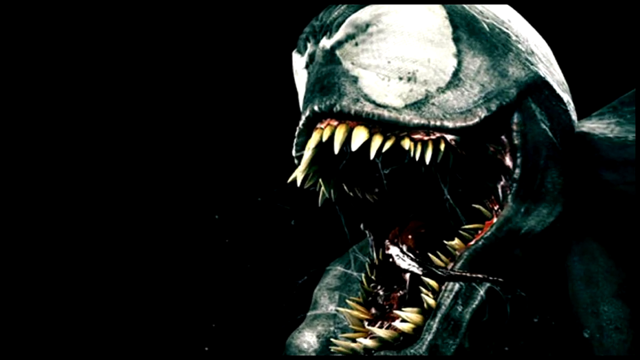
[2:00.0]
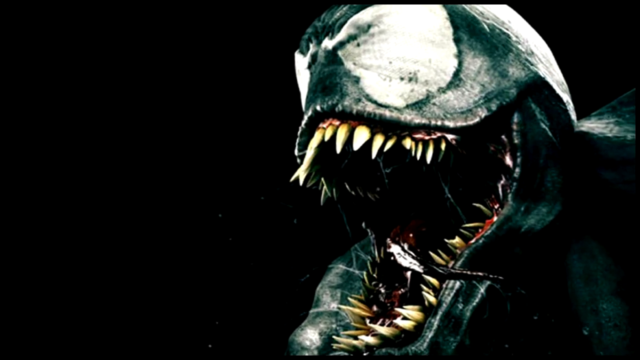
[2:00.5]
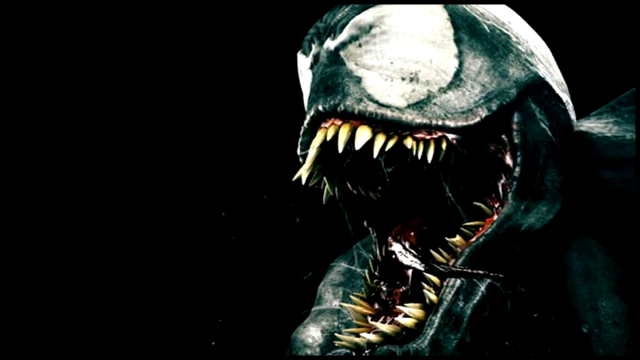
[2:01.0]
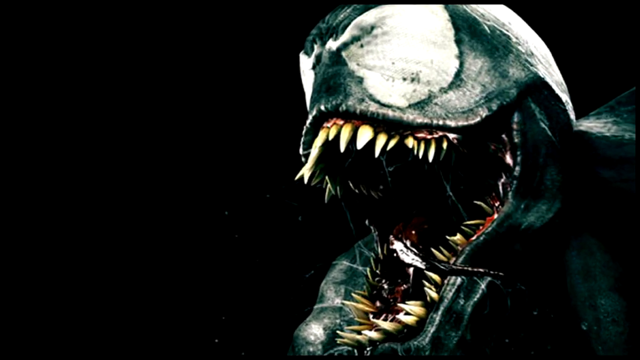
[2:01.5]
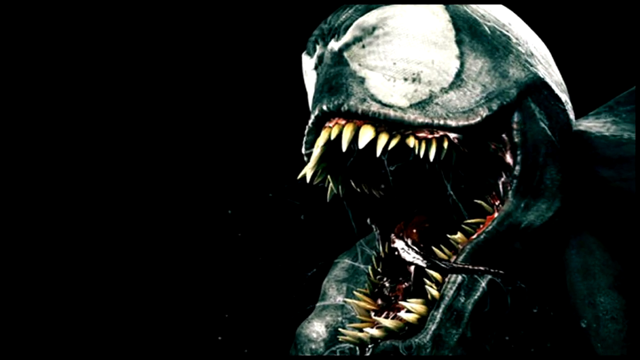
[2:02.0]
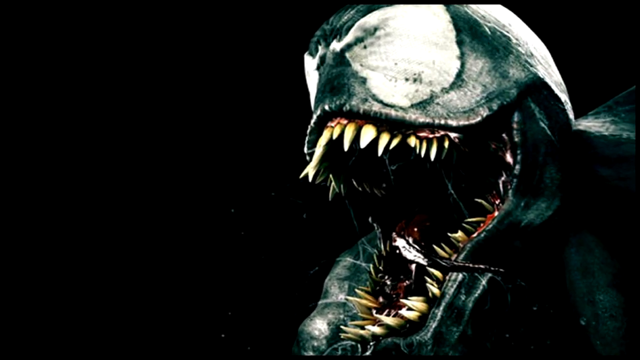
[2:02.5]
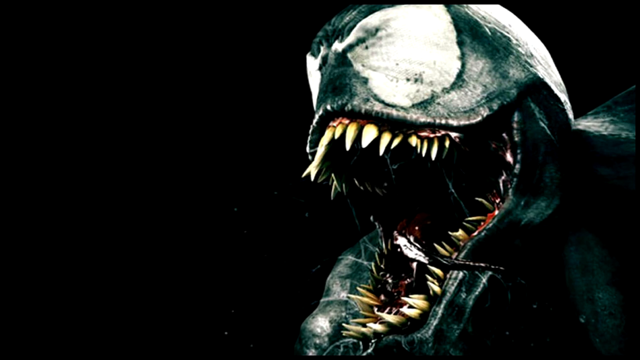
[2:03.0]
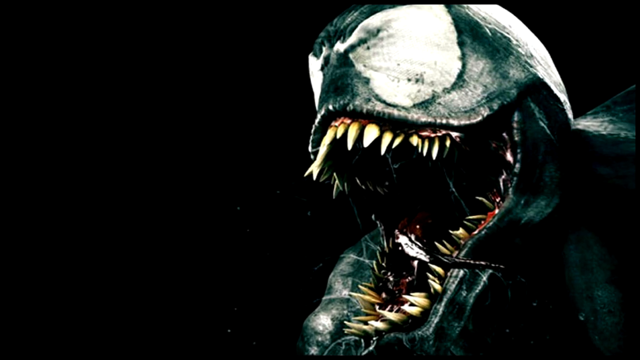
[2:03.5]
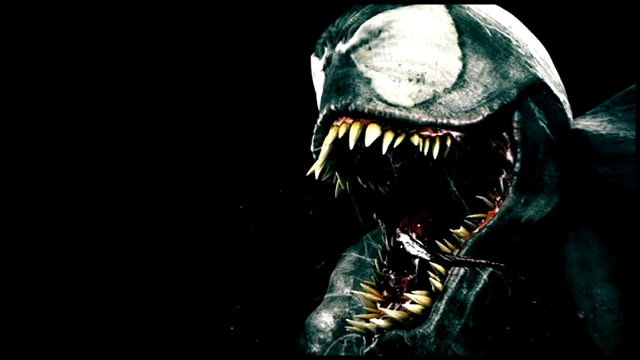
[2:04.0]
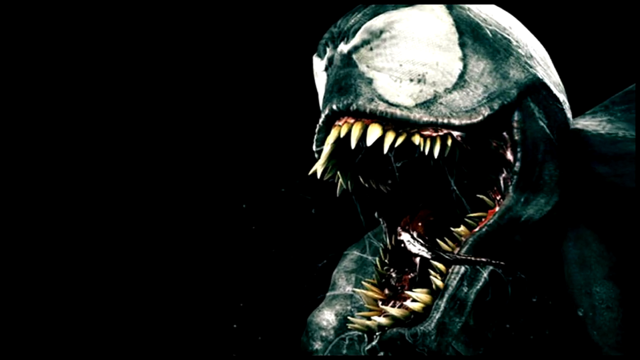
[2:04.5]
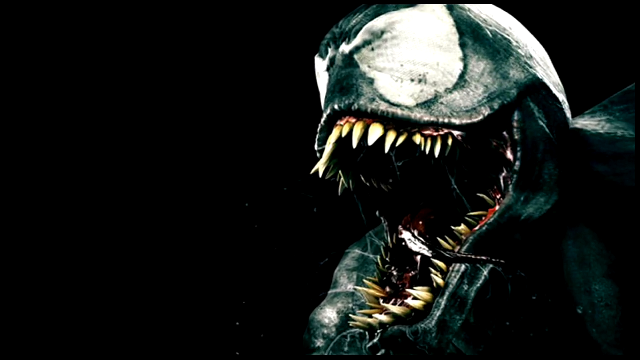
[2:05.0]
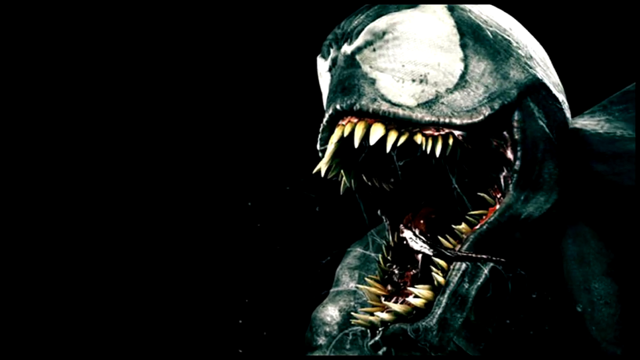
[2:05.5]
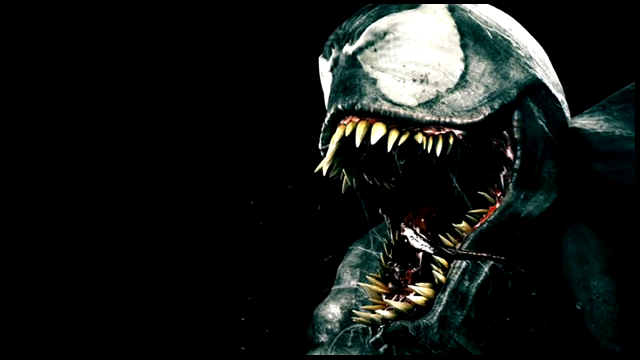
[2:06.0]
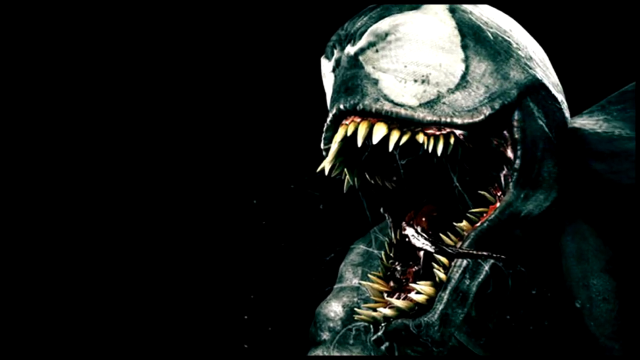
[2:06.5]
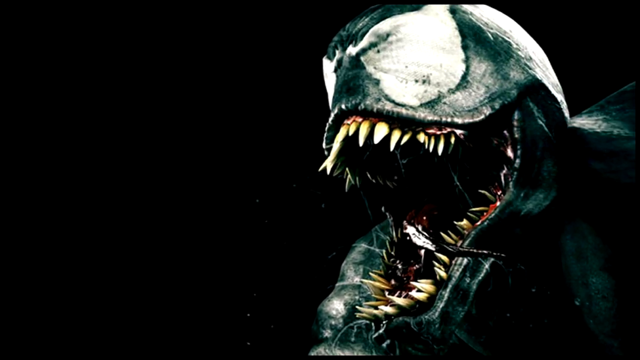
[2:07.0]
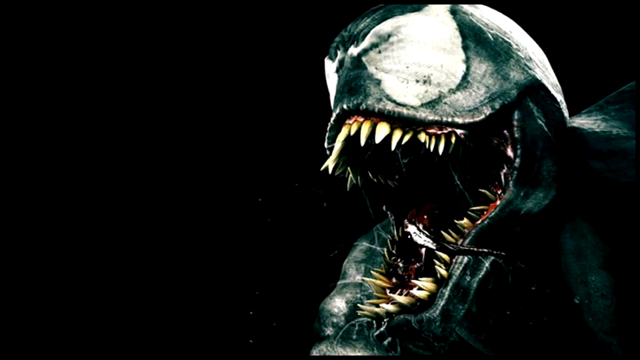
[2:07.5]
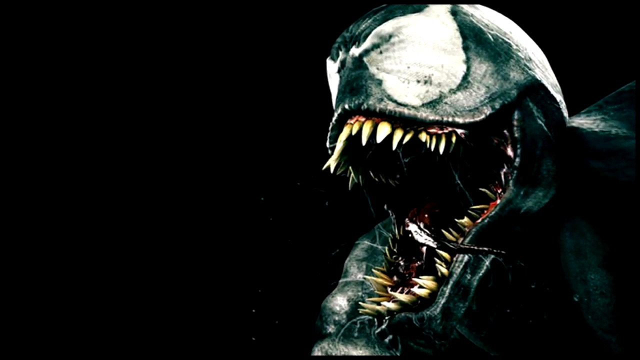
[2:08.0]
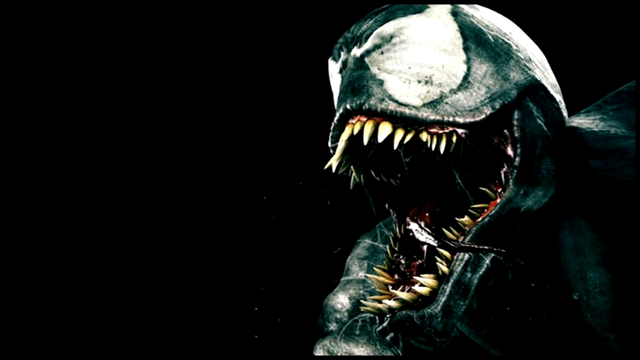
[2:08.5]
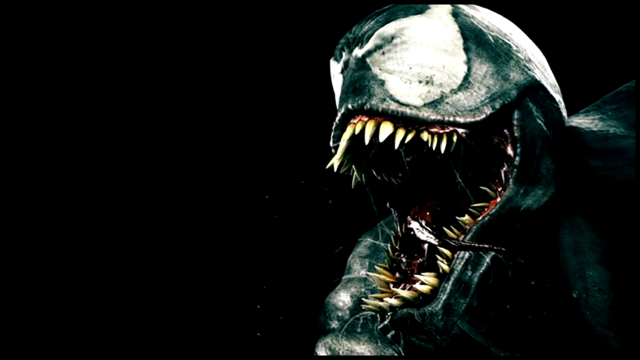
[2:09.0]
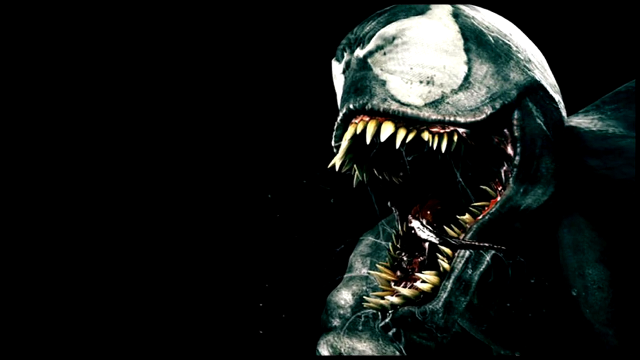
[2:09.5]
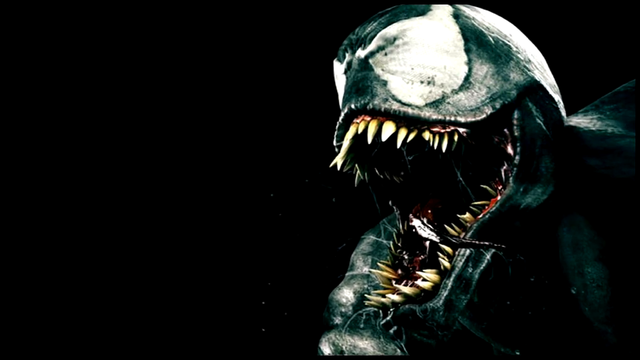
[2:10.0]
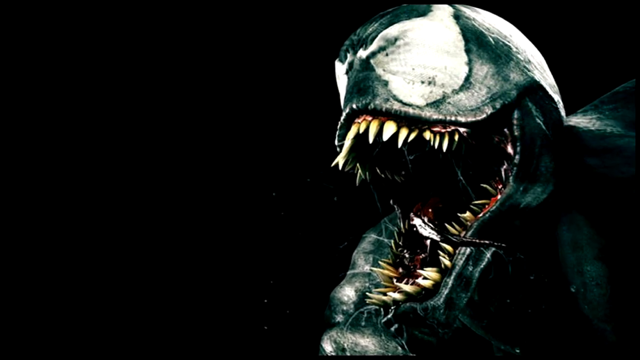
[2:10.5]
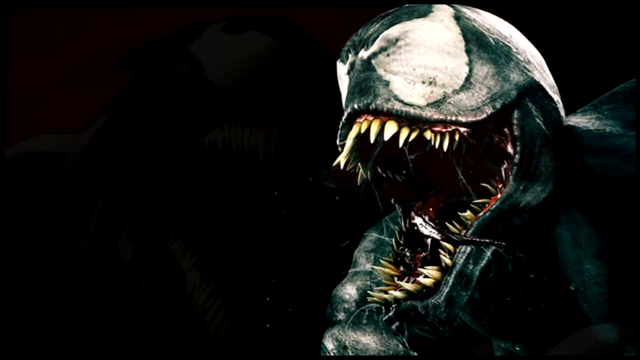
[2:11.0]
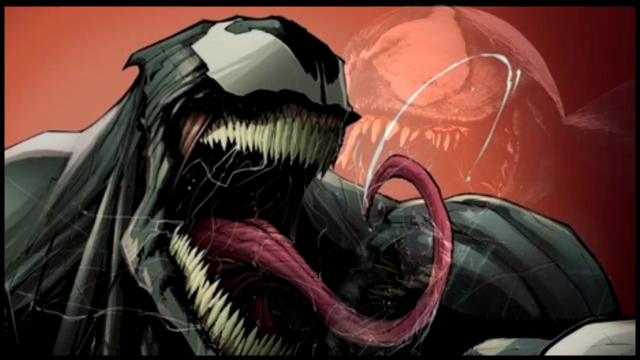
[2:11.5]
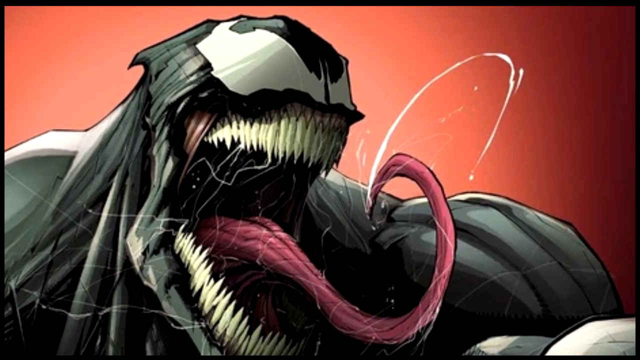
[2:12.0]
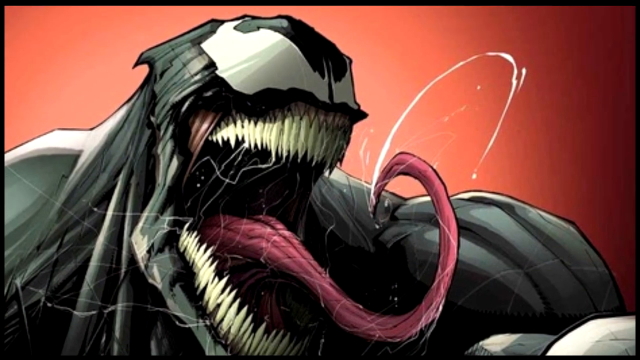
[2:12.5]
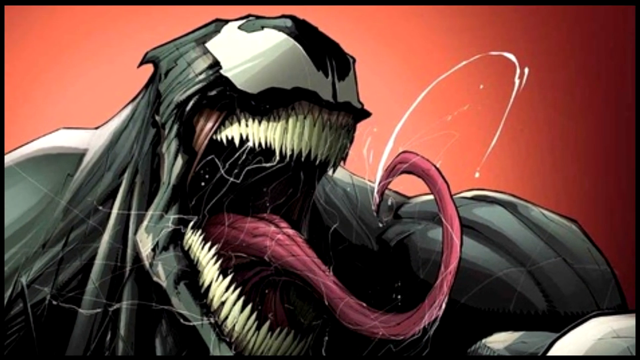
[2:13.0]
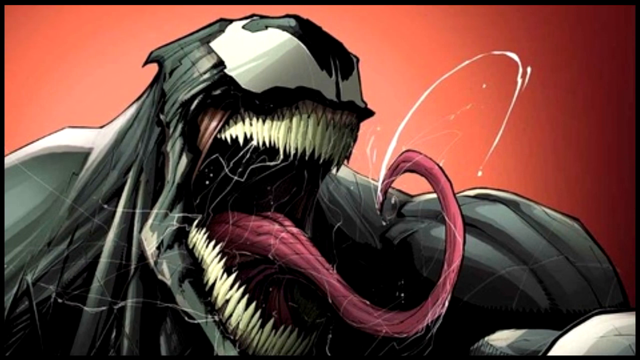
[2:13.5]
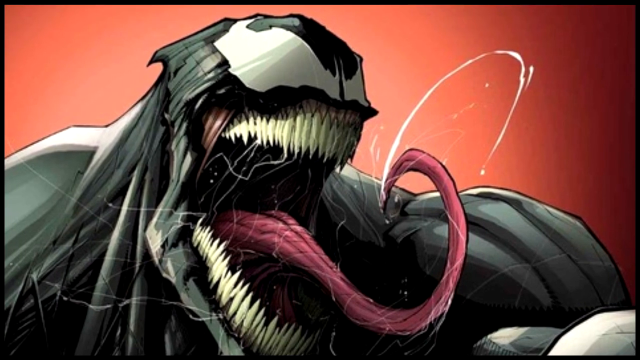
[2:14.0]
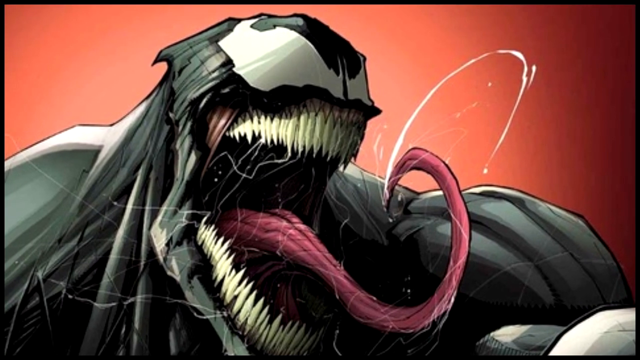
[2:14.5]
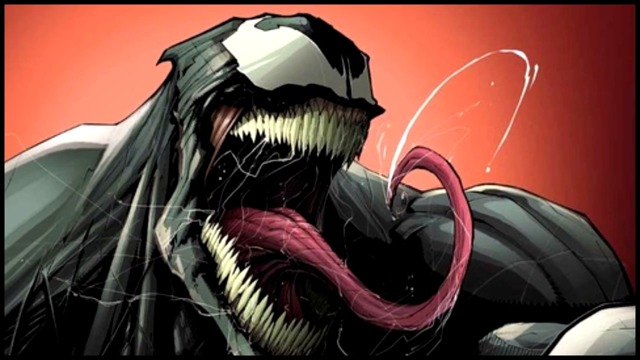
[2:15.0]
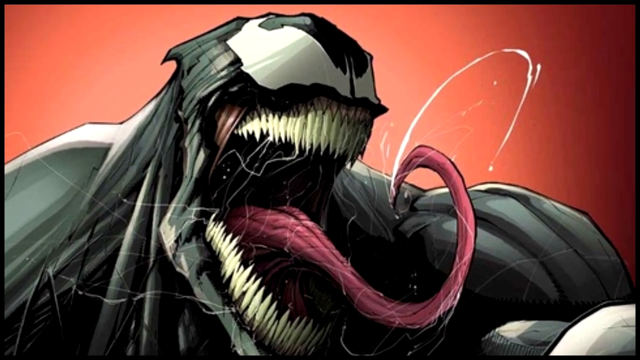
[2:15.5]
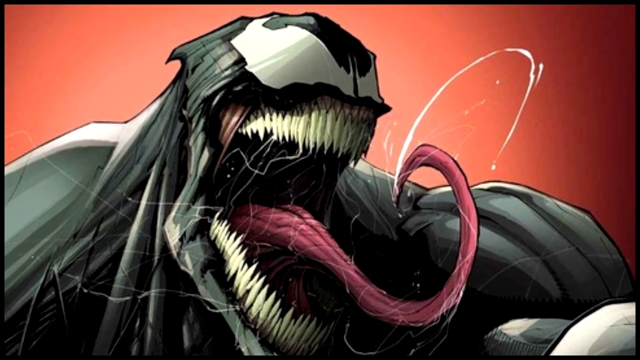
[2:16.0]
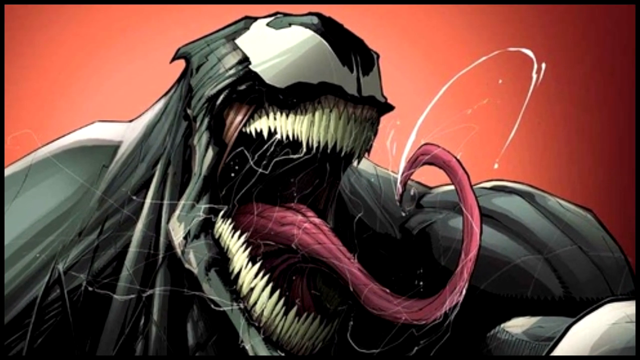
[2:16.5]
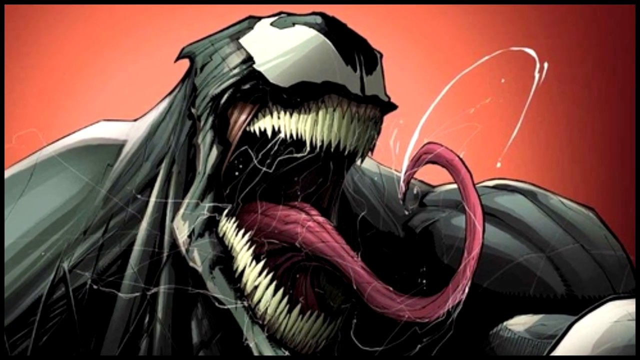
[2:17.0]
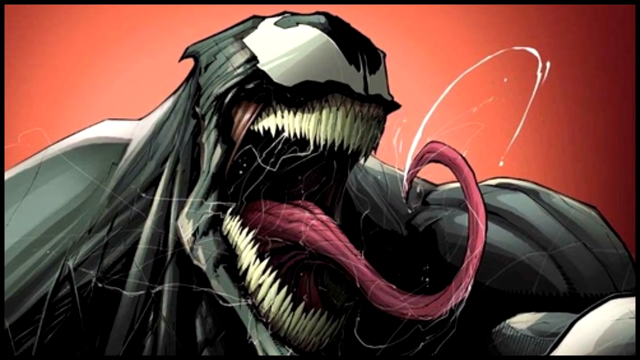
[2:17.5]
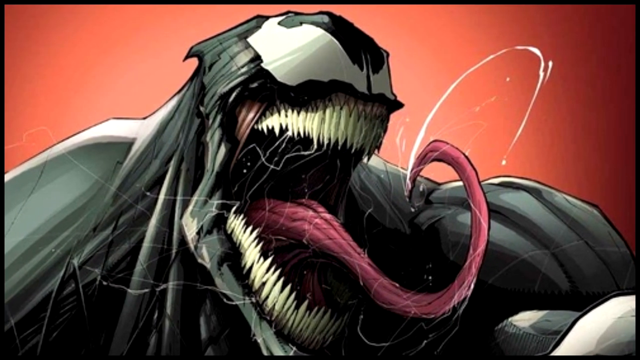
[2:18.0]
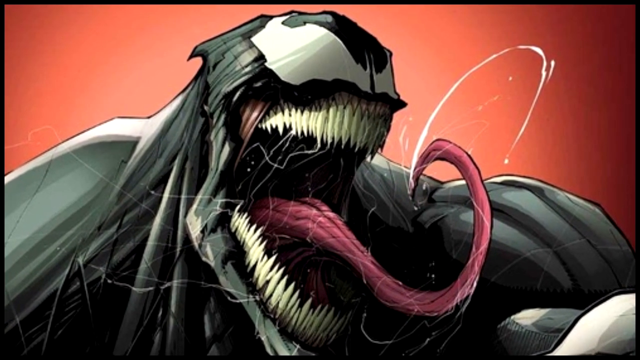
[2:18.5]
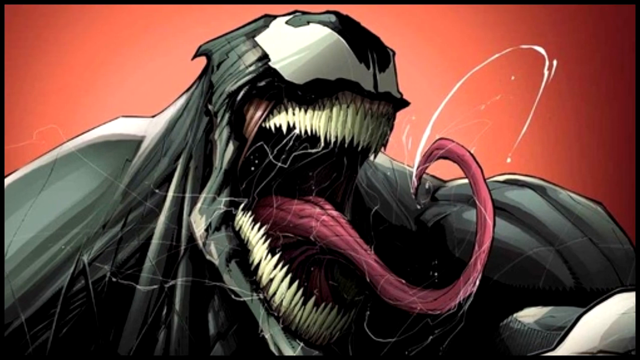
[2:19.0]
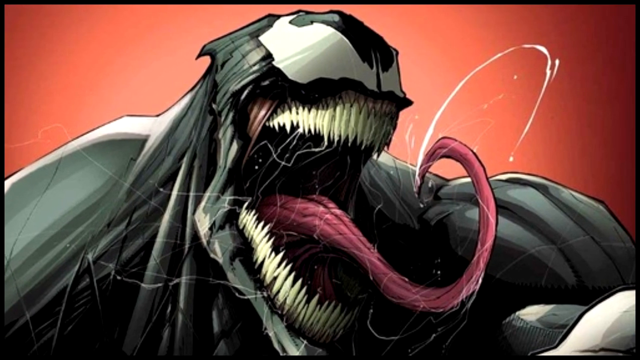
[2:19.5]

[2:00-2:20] The Venom creature fills the right half of the frame against a black background. Its mouth is open, but no red or pink tongue sticks out; inside the mouth is a black chasm. Pointy teeth still stick from the upper gum line, but they look less long and less sharp, some shorter and thinned. The bottom teeth are visible, some broken diagonally, some very thin, and some look as if they might have been torn from the gums. Something protrudes from the bottom of the mouth; it looks almost black and could be a shriveled tongue. Barely any saliva is visible. The tongue looks black and shriveled, and the creature is more of a grey-green colour. The camera slowly zooms out, showing more of the creature on the right side.